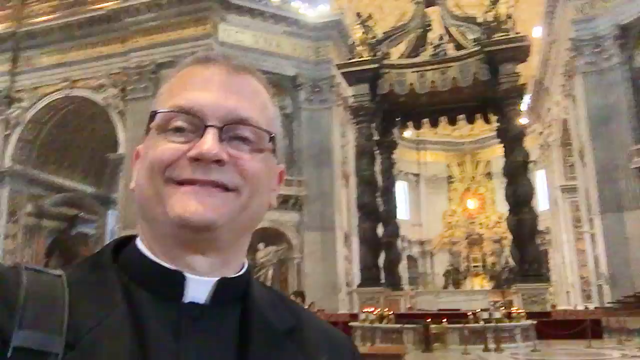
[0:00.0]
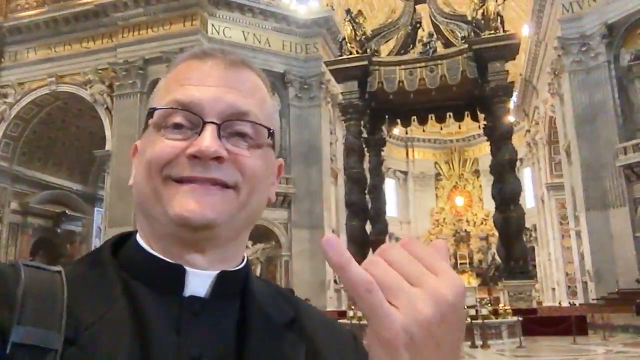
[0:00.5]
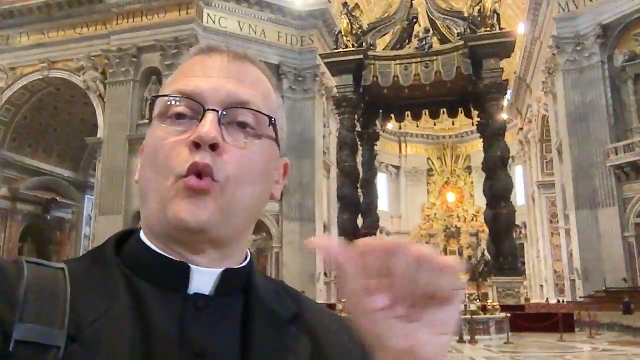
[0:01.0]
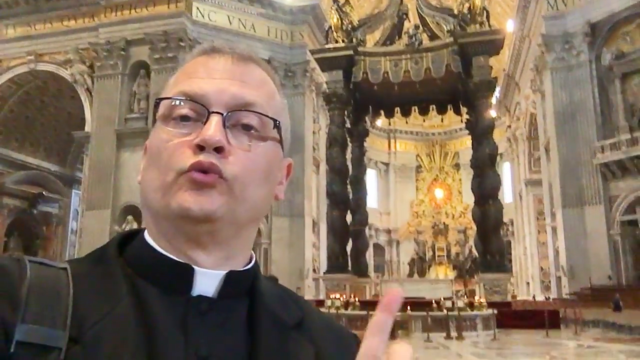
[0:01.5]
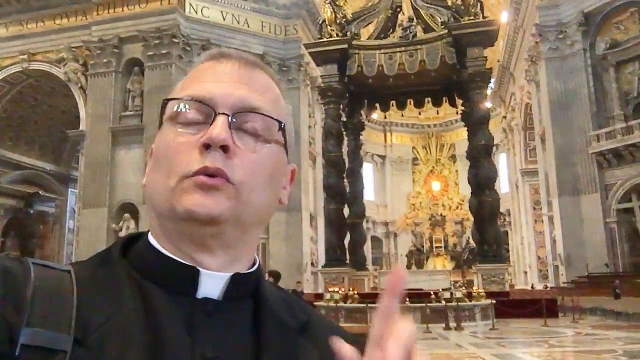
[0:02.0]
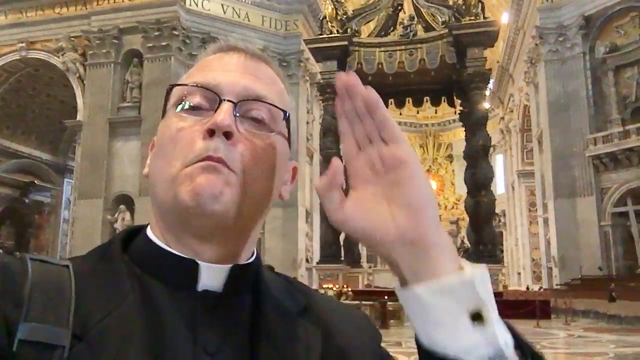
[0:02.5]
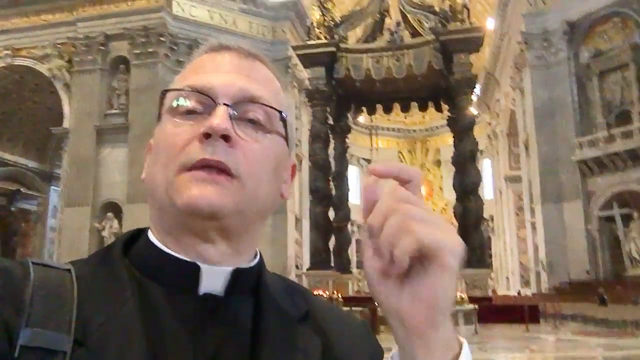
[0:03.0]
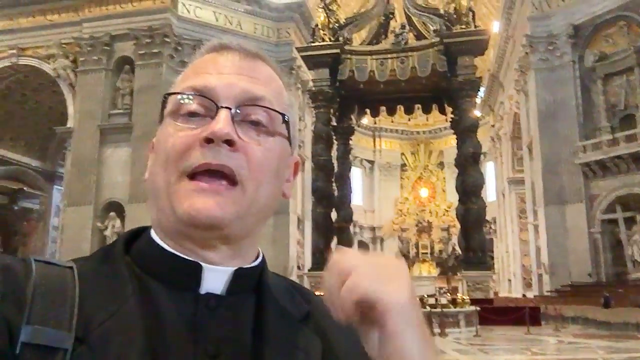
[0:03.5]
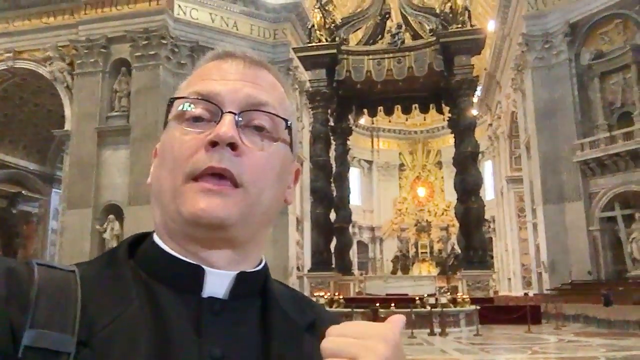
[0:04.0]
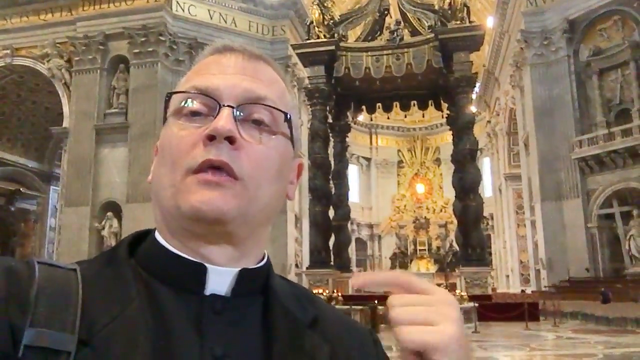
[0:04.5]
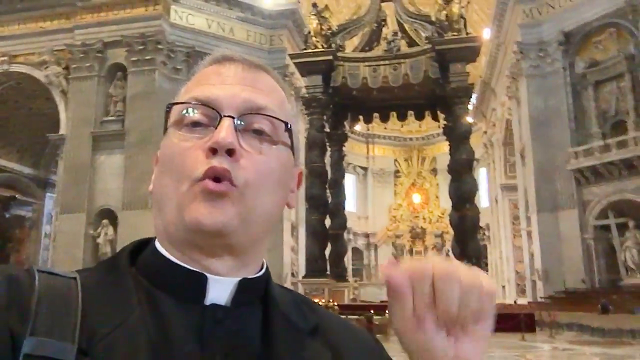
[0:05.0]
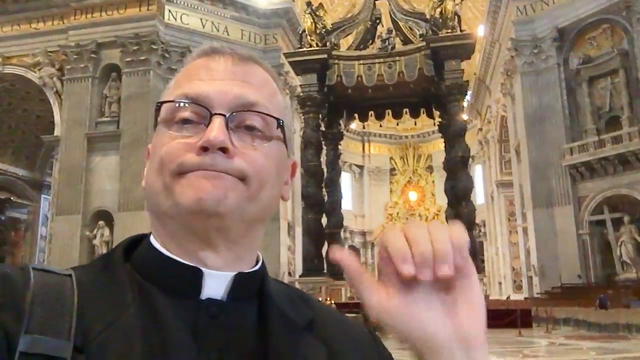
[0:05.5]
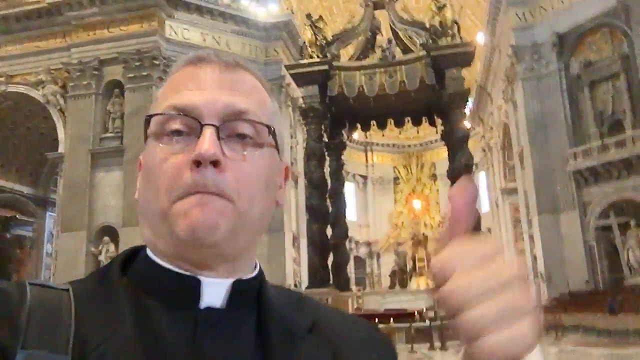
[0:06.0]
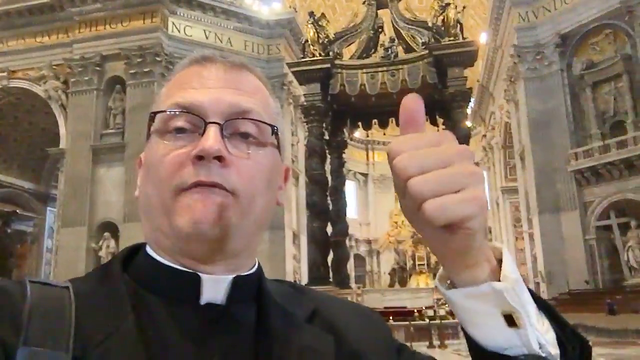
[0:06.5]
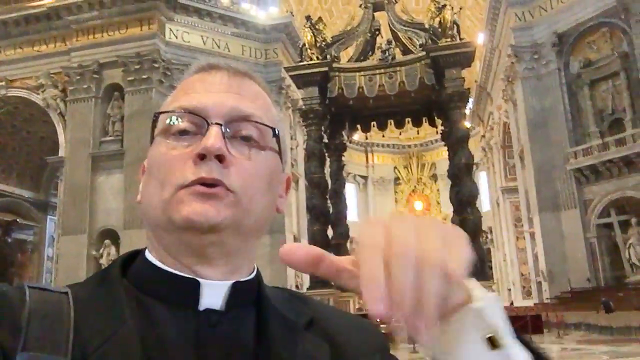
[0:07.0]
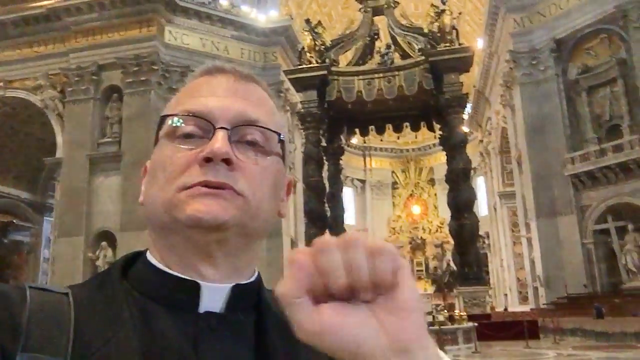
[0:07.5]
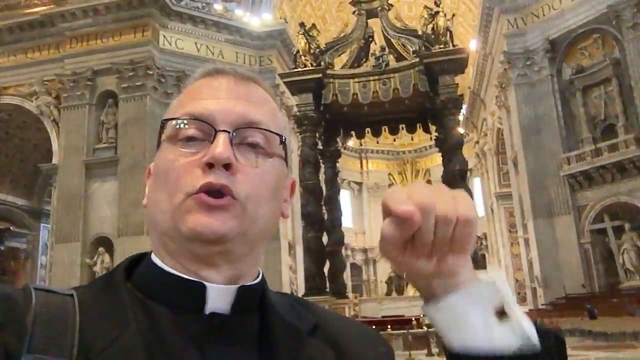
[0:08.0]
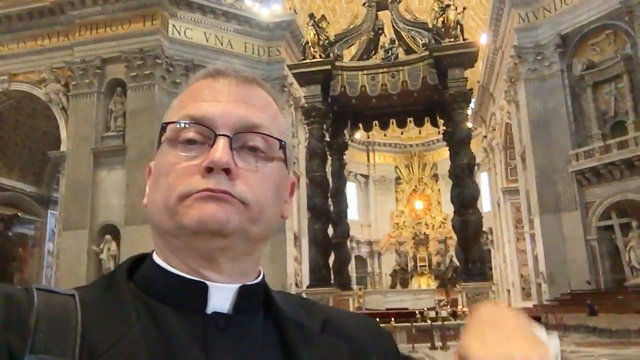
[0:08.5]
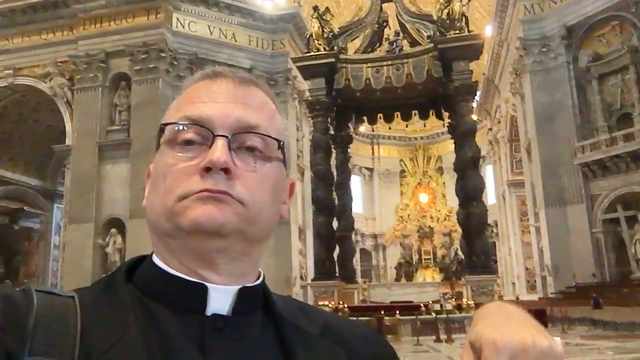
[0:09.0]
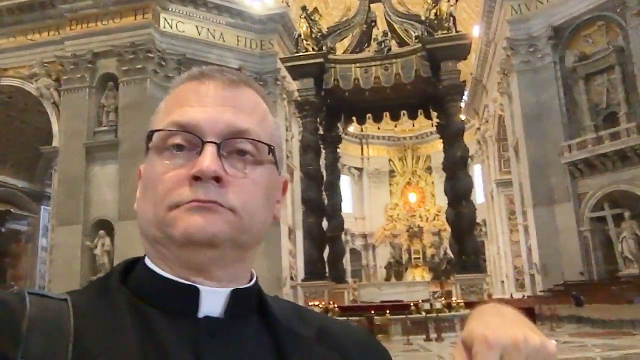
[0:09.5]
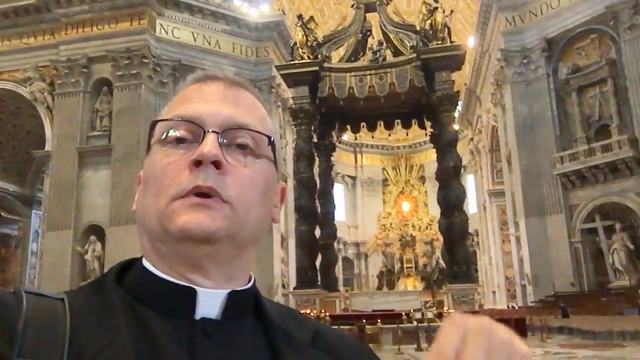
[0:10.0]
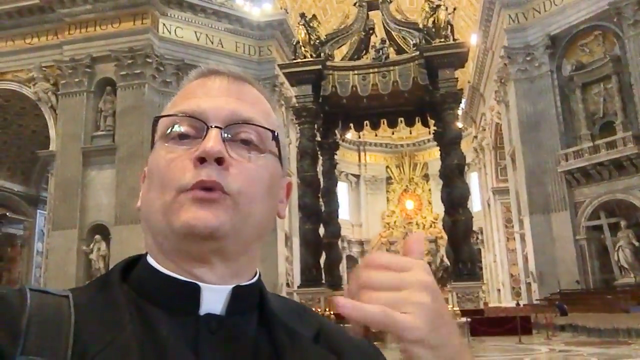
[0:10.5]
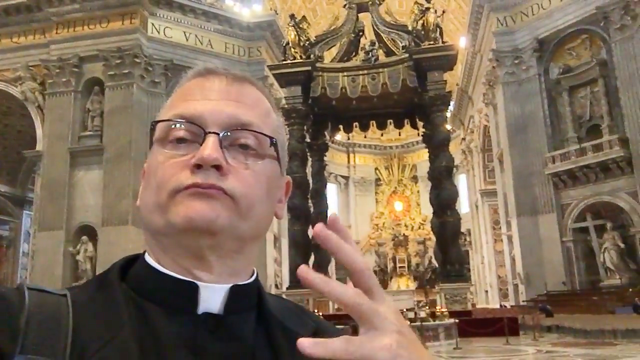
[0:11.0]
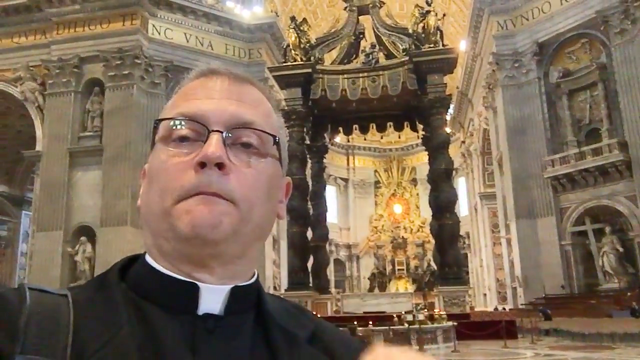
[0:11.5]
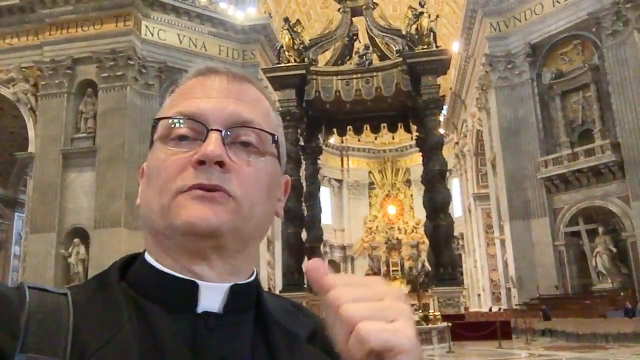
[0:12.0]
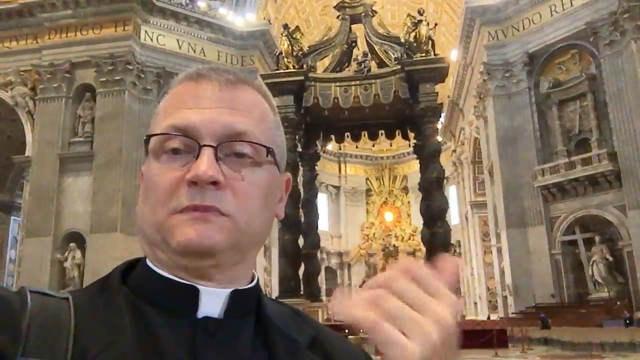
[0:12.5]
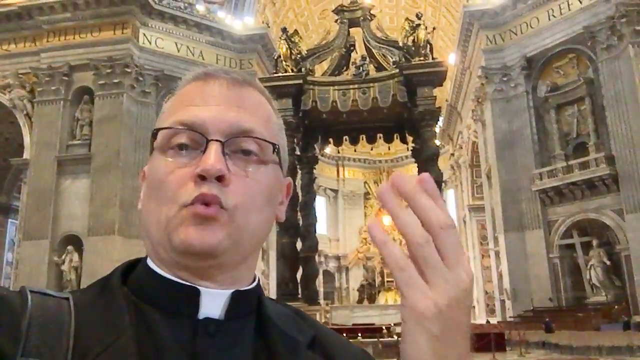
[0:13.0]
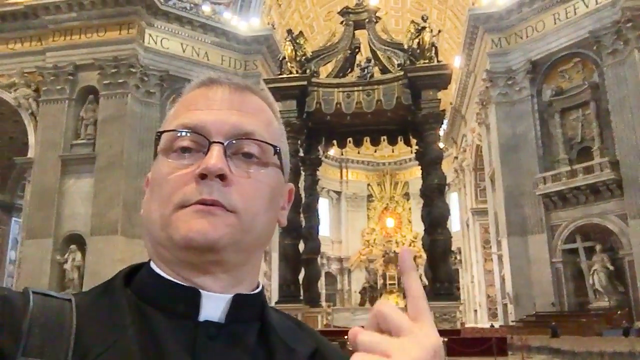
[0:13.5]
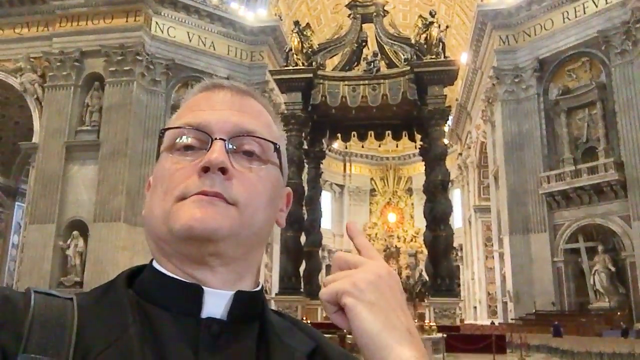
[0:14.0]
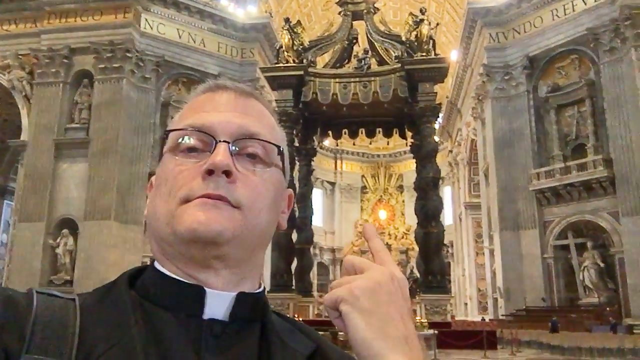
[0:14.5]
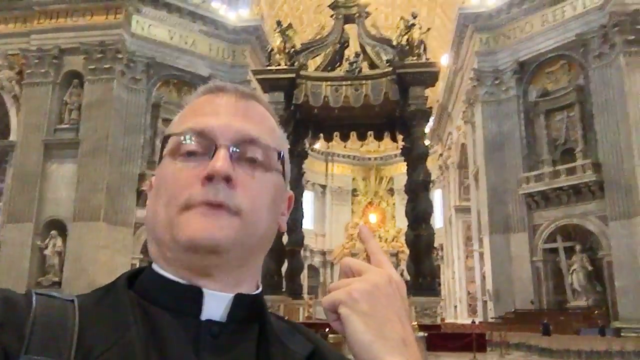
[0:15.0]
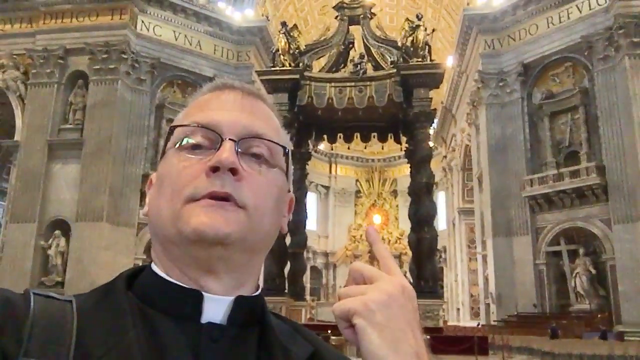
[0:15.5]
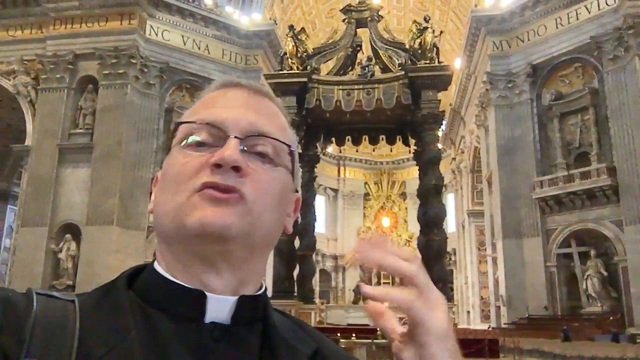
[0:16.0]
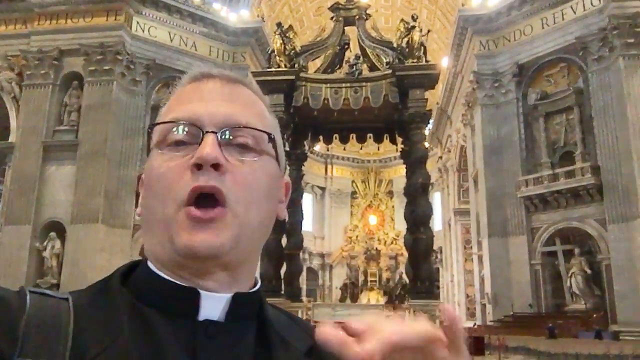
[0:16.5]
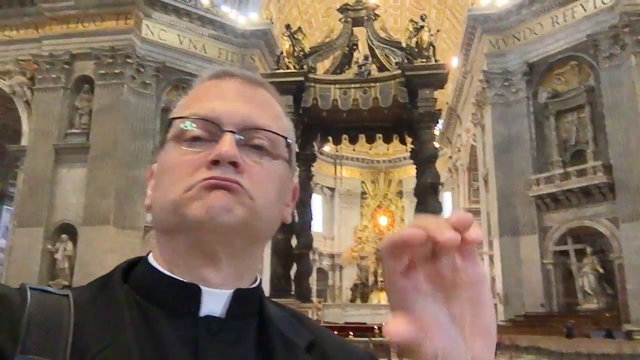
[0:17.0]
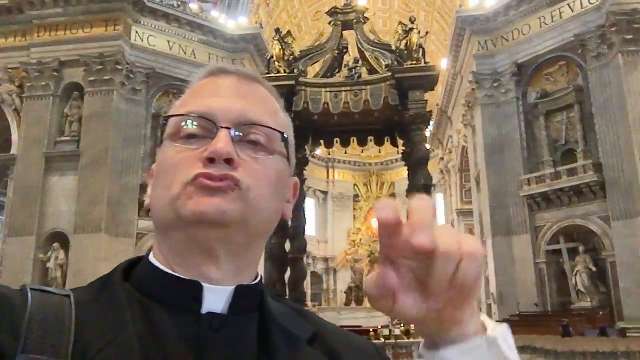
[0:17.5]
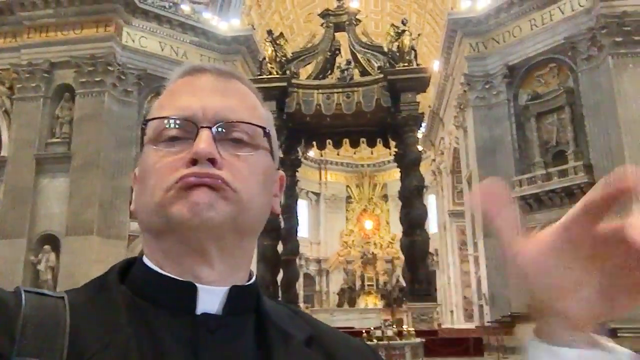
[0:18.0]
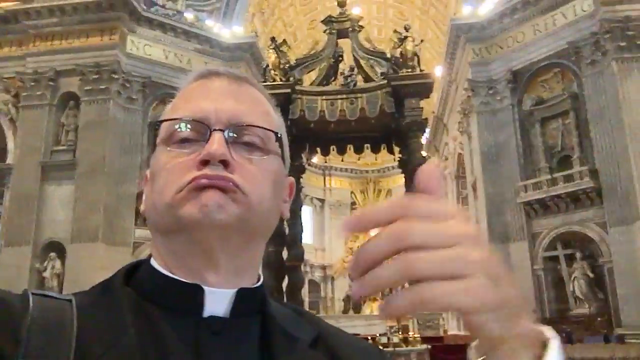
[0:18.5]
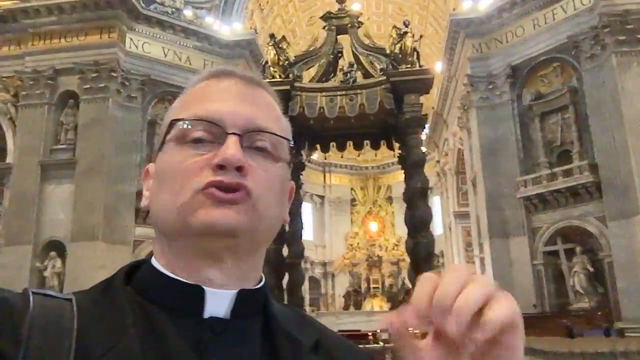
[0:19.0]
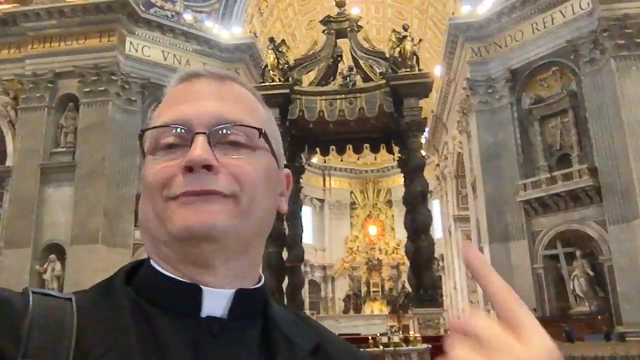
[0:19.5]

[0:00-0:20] A priest stands in an enormous cathedral that appears to have at least two levels. He stands in front of a structure with four columns and a top roof, and the structure has a platform with steps leading up to it. He talks to the camera while making gestures with his left hand, using sign language. He wears glasses and a white collar, his hair is graying, and he is apparently in his 40s. He is smiling and in a great mood. The cathedral is very elaborate, with gold trim, gold statues, marble, and very high vaulted ceilings.